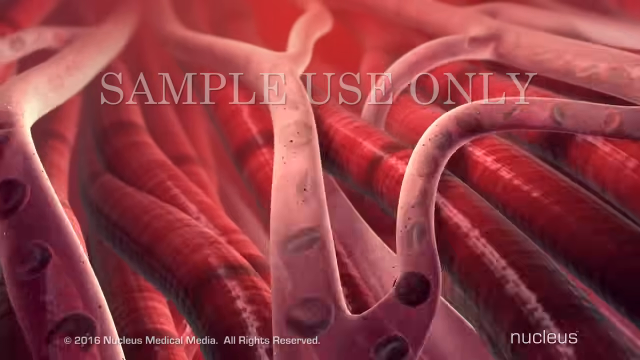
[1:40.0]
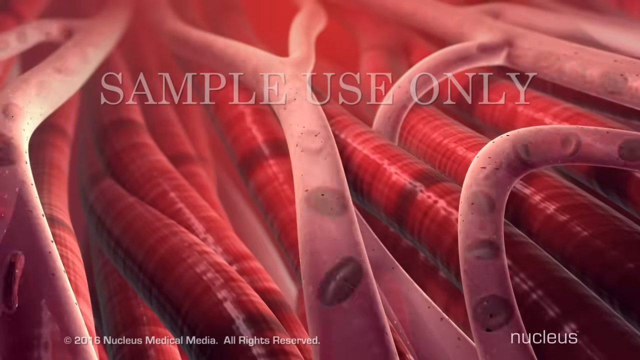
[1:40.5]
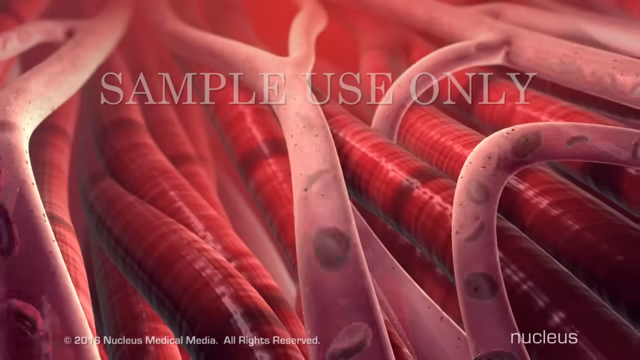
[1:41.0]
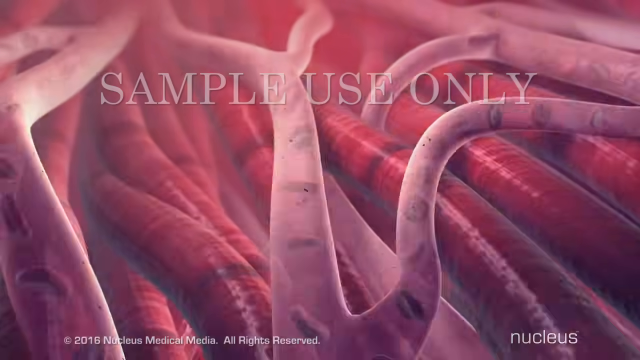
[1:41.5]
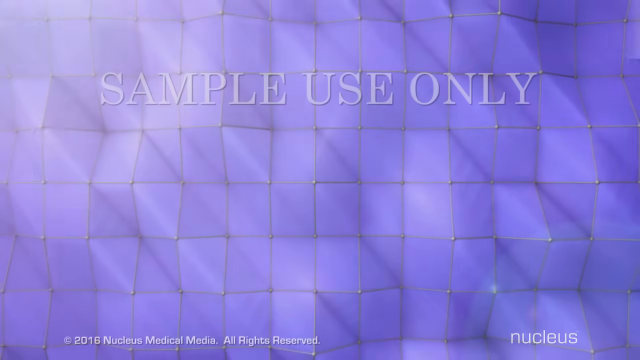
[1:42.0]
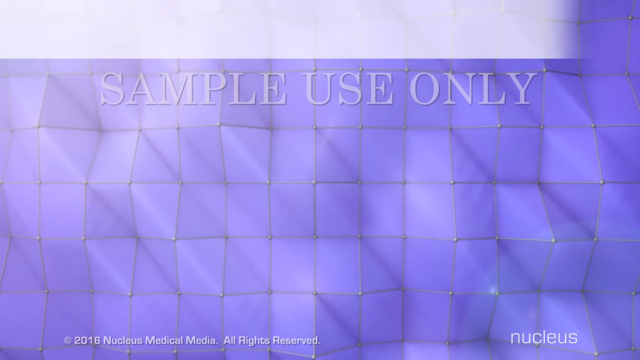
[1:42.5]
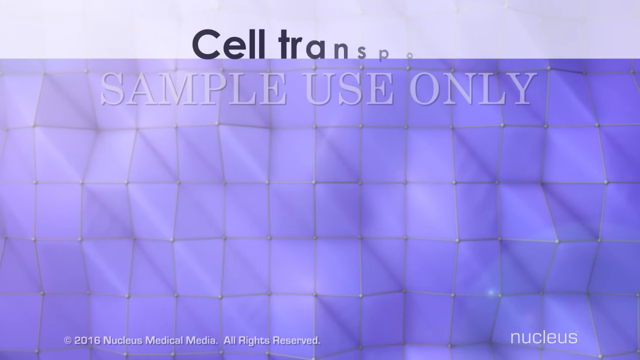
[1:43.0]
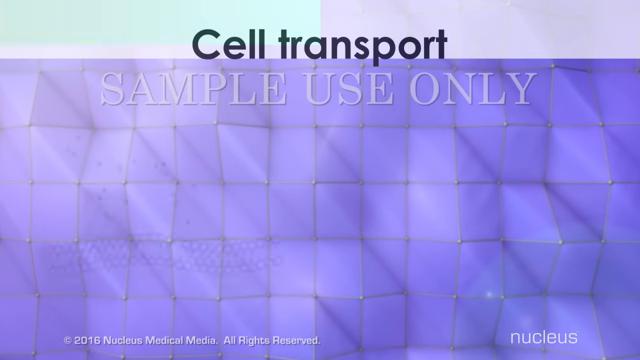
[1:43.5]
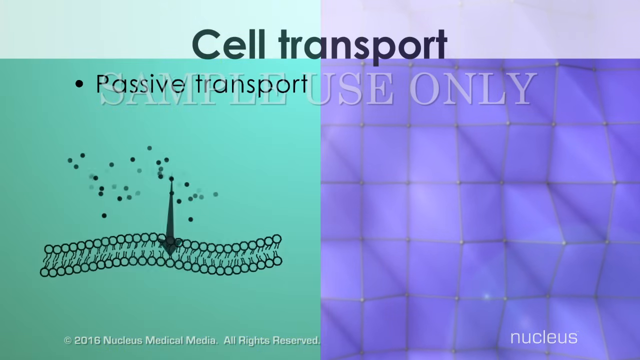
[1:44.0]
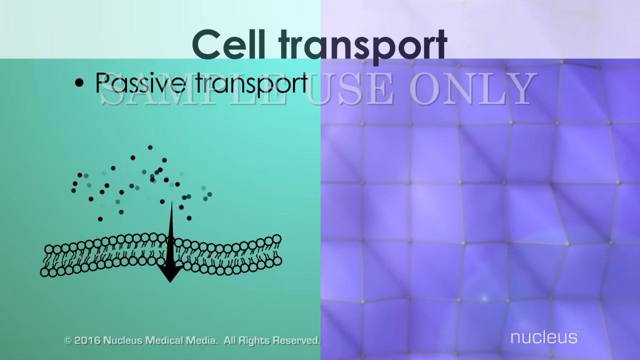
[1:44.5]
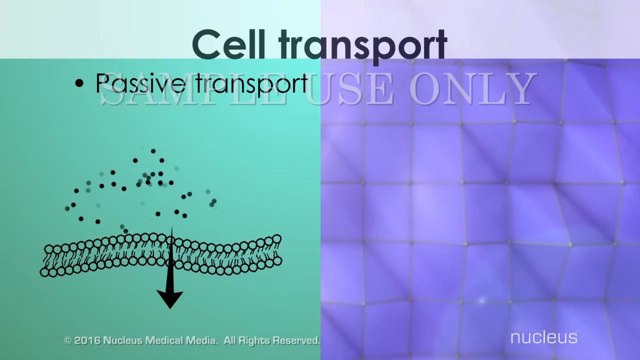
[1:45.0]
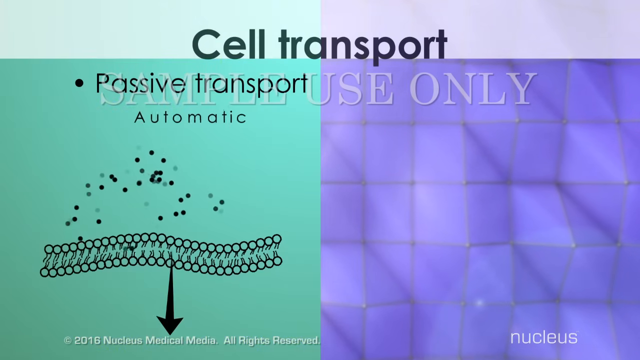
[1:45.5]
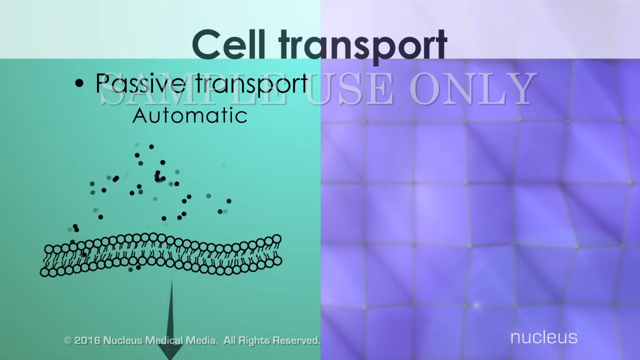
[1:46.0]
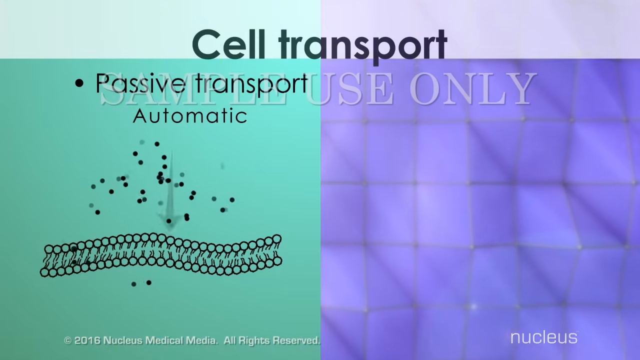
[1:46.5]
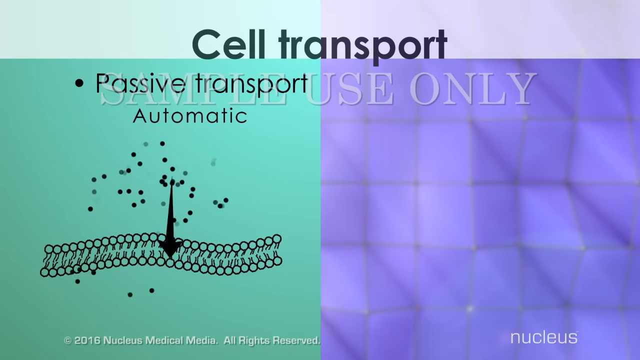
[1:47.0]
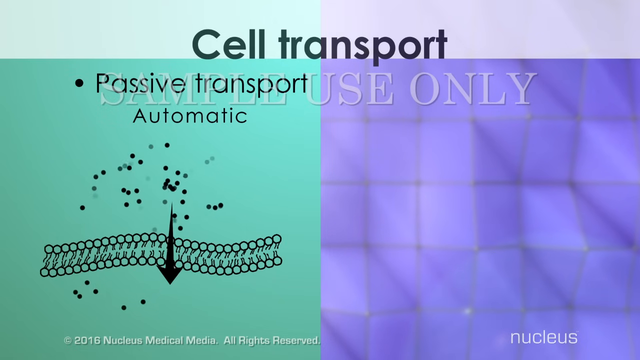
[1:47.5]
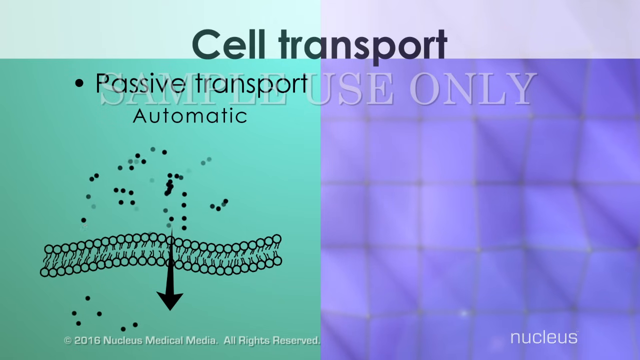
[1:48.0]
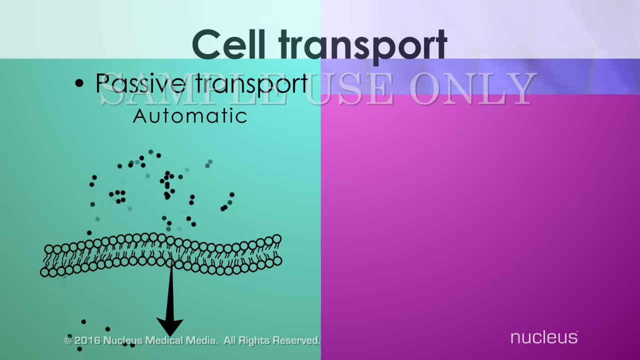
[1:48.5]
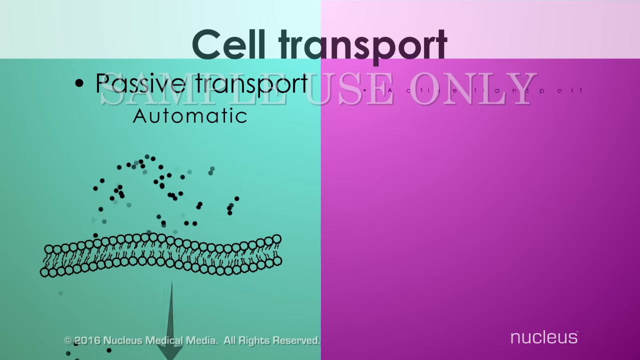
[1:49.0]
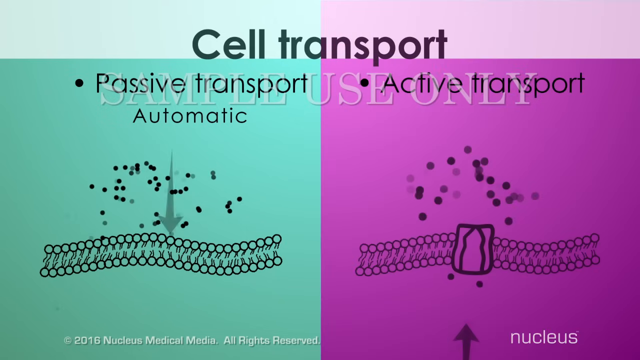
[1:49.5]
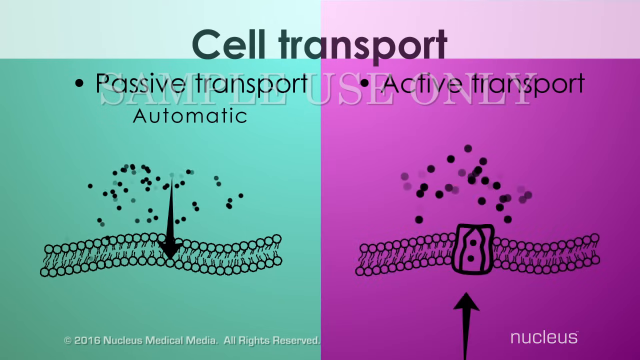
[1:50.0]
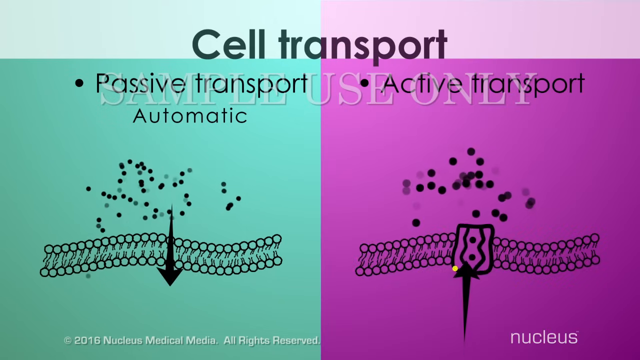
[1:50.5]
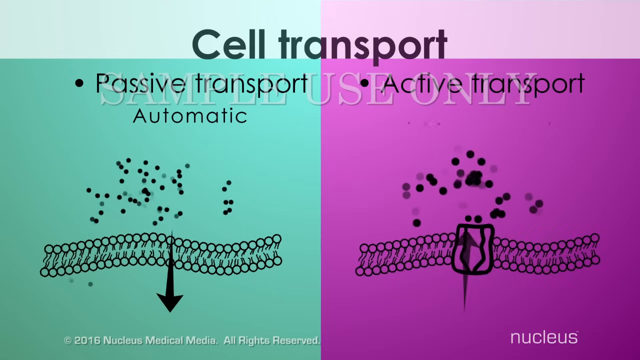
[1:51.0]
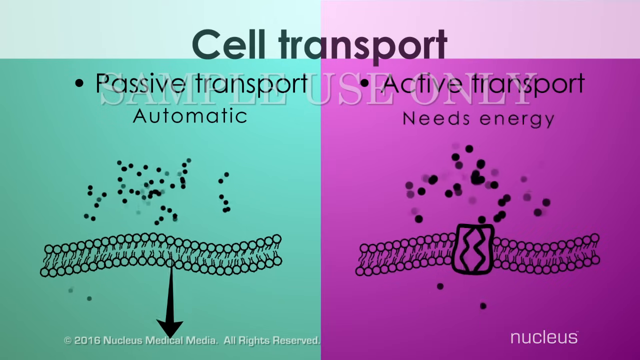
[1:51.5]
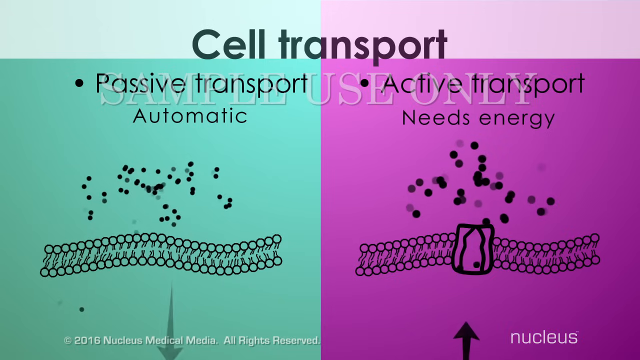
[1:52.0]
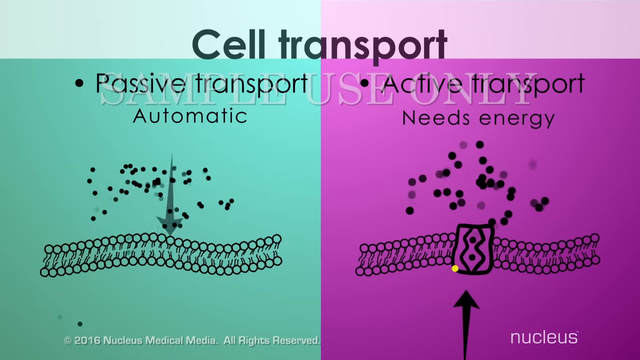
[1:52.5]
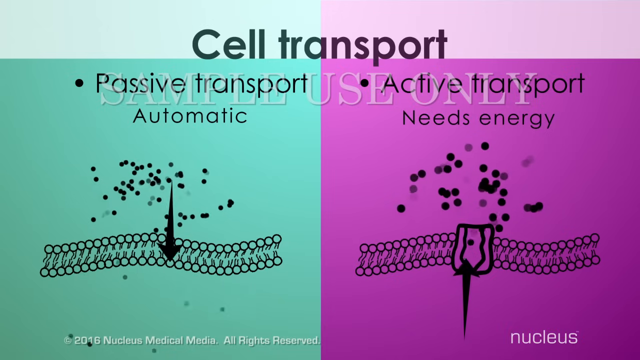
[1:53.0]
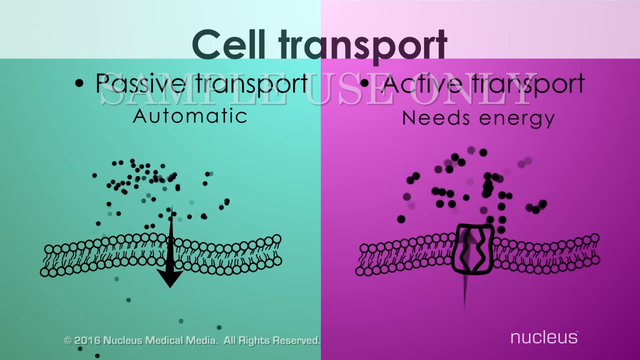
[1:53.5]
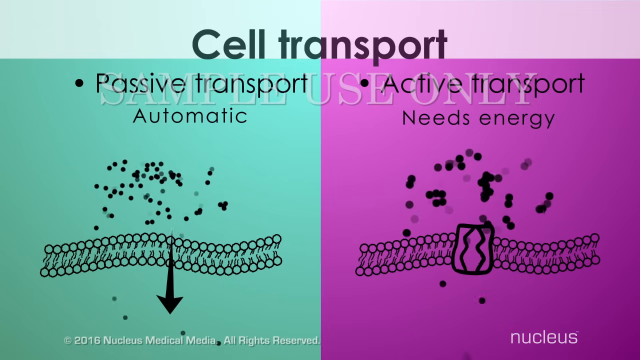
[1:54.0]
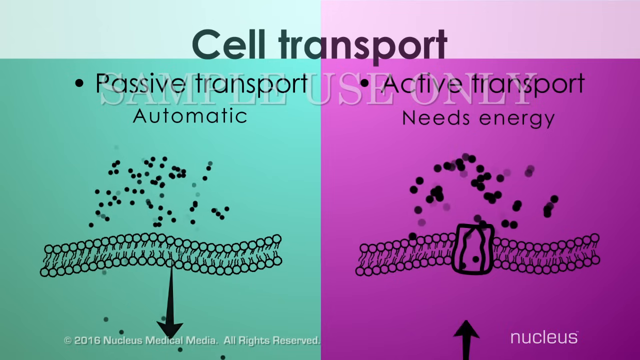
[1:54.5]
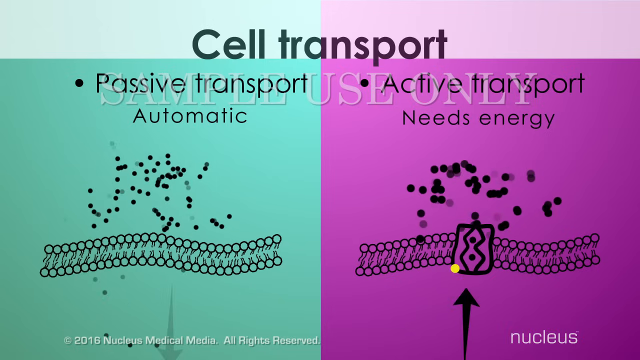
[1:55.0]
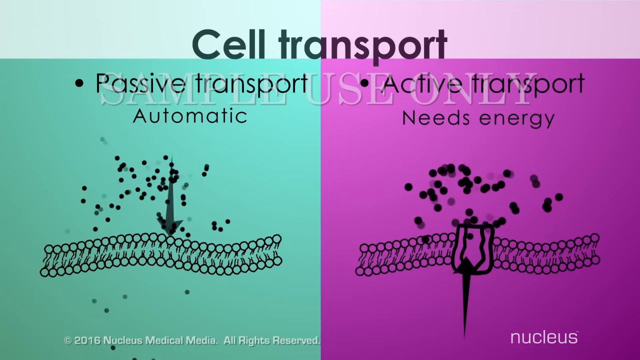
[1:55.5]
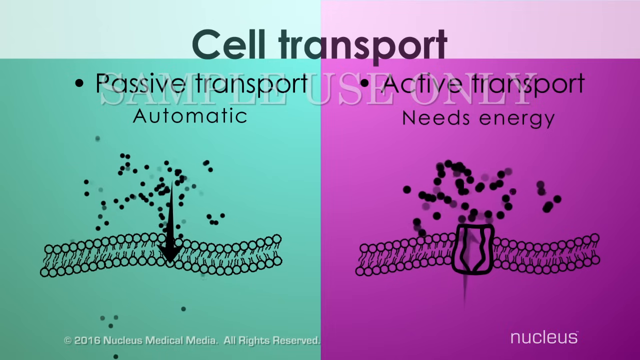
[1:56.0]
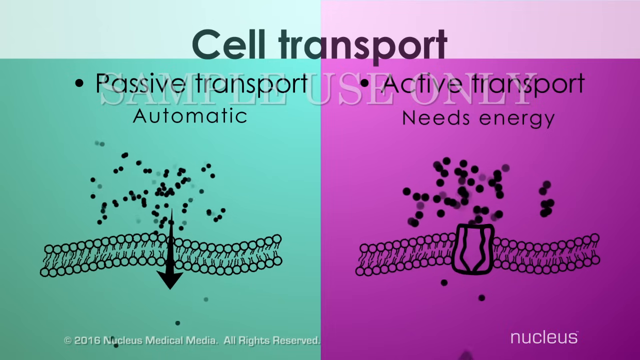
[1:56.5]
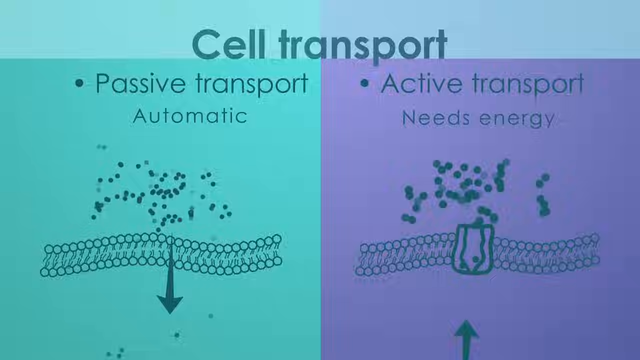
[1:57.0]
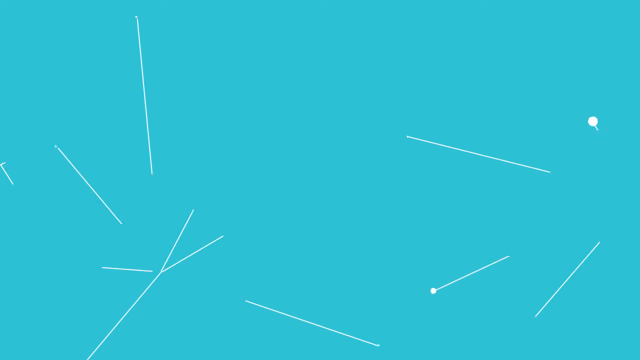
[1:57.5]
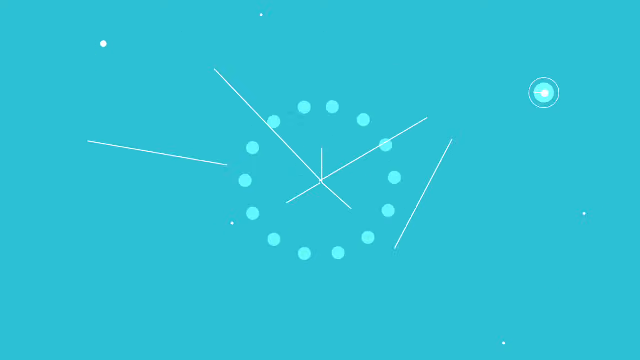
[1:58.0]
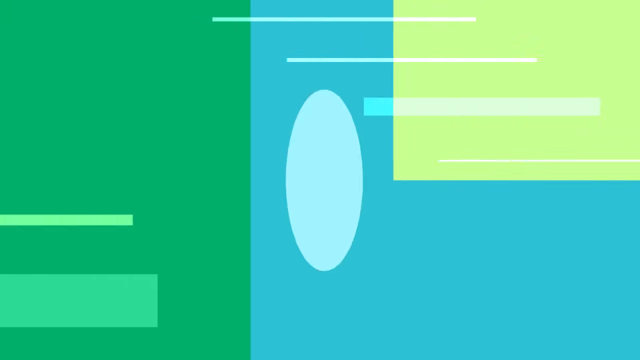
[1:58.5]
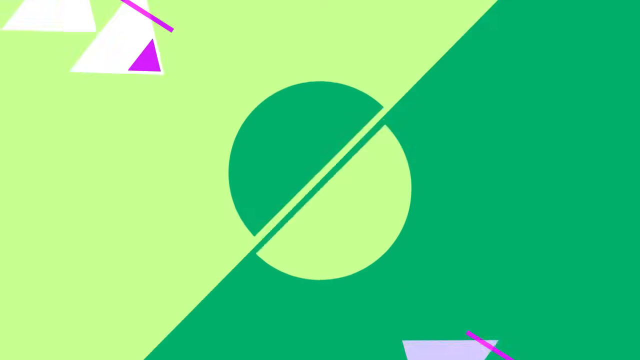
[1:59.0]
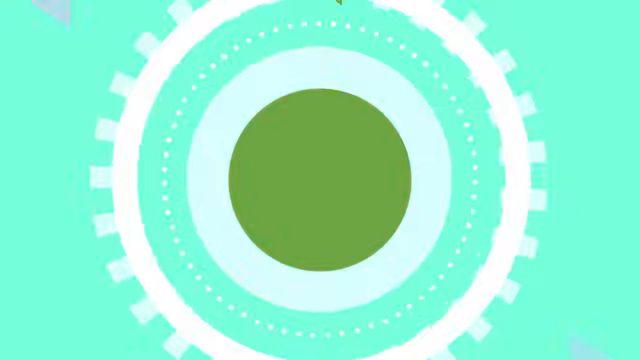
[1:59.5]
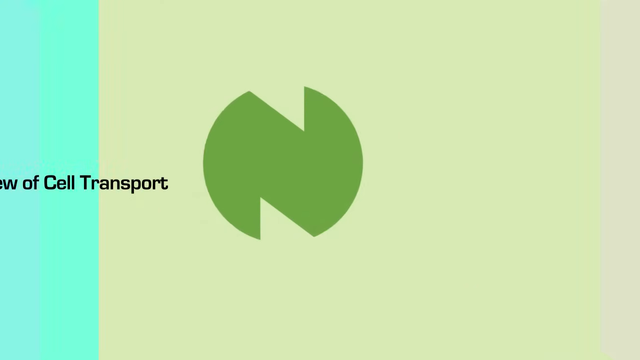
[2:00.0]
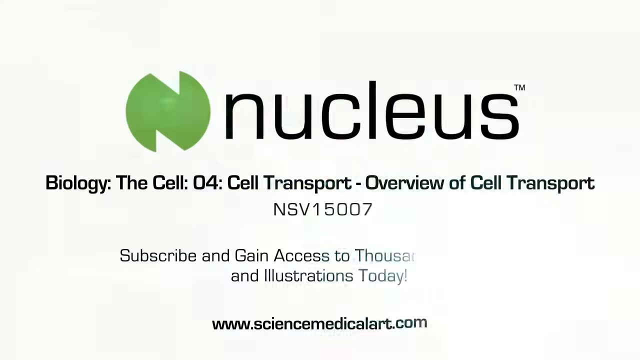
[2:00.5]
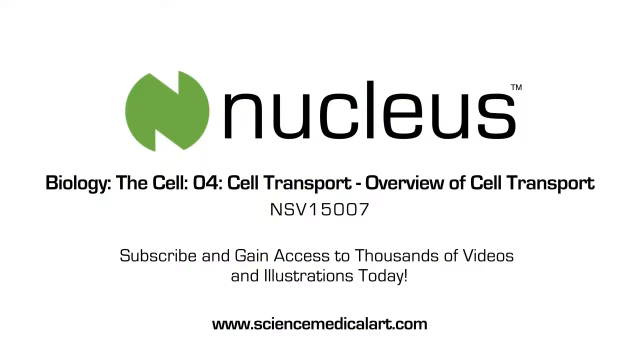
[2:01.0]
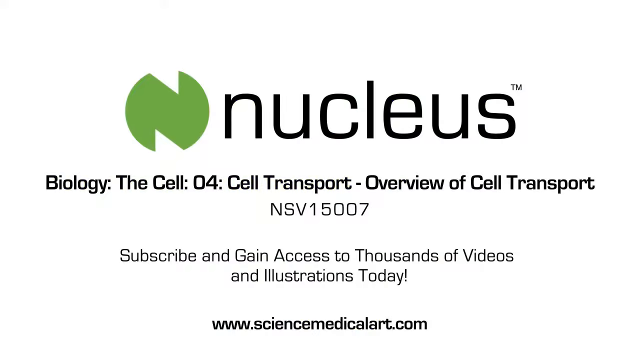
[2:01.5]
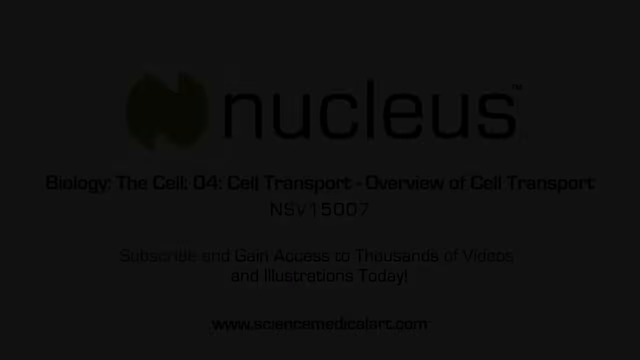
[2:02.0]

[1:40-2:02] After the heart, the video returns to cell transport. On the left side, with a teal background, it says "passive transport," and a black-and-white animation of diffusion shows a downward arrow going through the cell membrane. On the right side, with a purple background, it says "active transport," showing the protein pump embedded in the cell membrane and an upward arrow, from lower to higher concentration of molecules. The text indicates that active transport needs energy and passive transport is automatic. The ending credits follow, showing that the video is from Nucleus, with the topic "biology the cell 04 cell transport overview of cell transport," text saying "subscribe and gain access today," and the URL "www.sciencemedicalart.com."